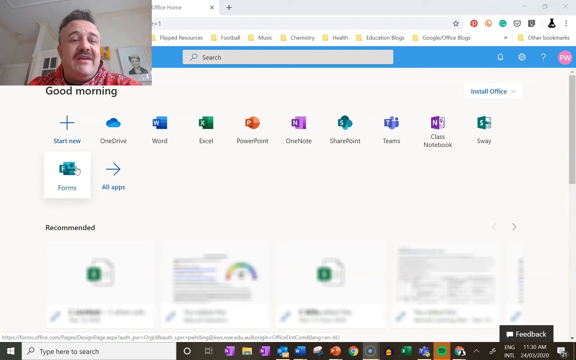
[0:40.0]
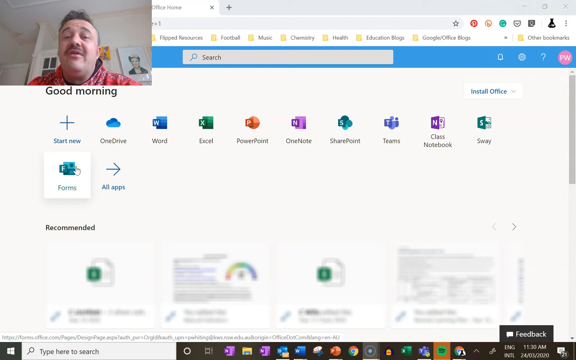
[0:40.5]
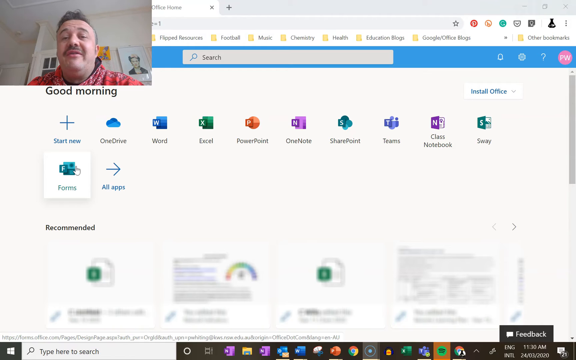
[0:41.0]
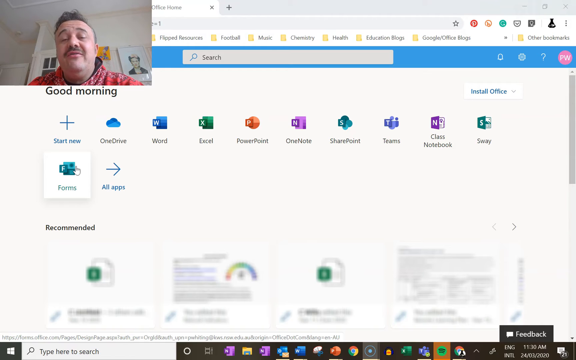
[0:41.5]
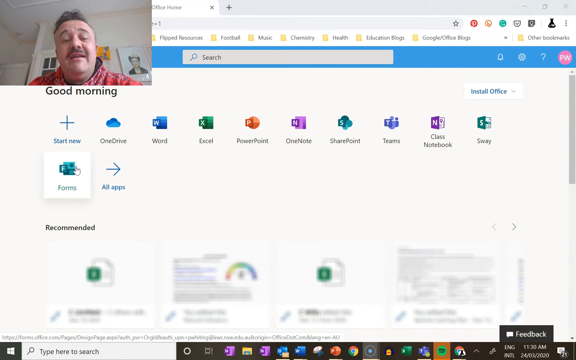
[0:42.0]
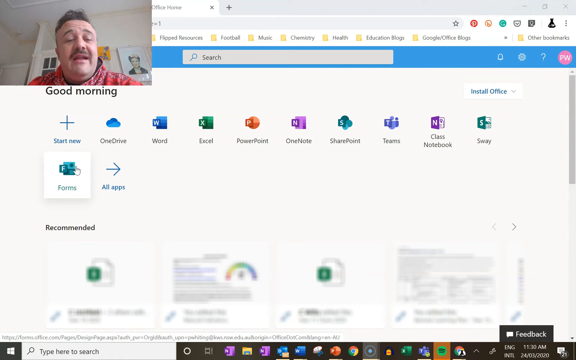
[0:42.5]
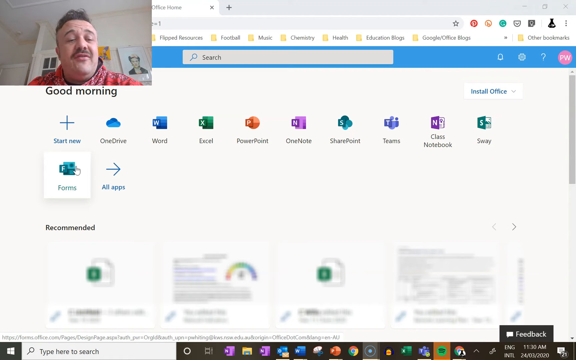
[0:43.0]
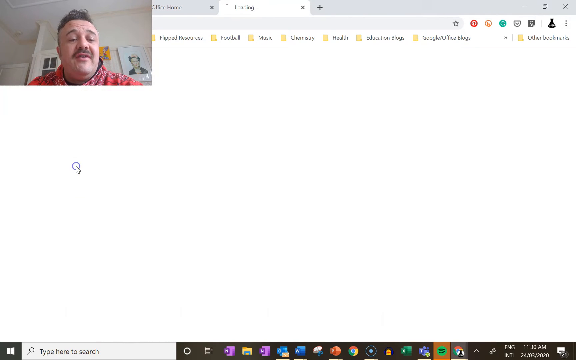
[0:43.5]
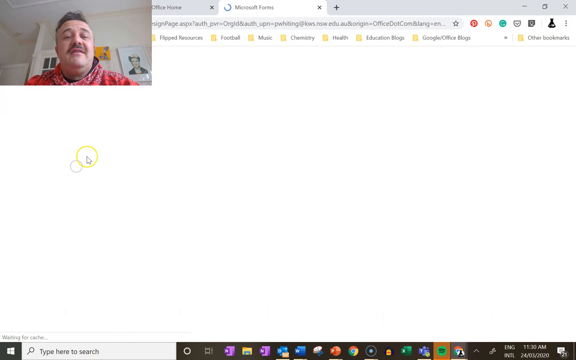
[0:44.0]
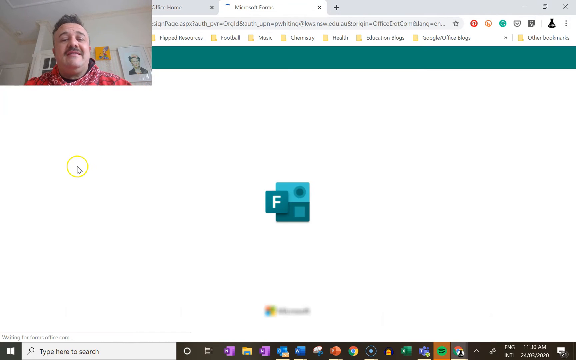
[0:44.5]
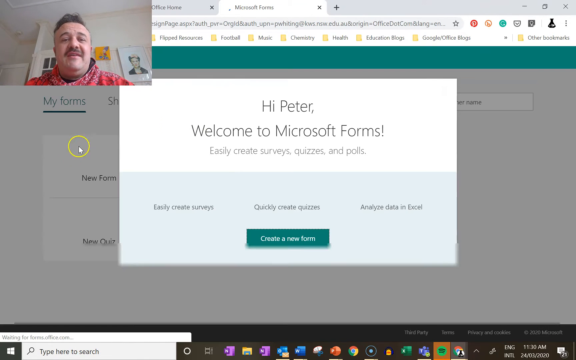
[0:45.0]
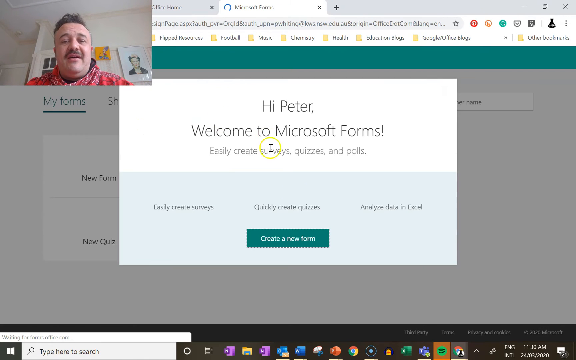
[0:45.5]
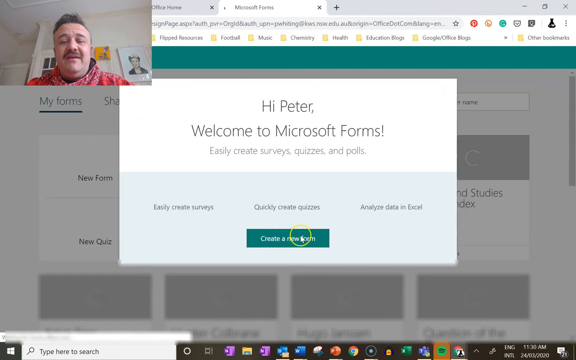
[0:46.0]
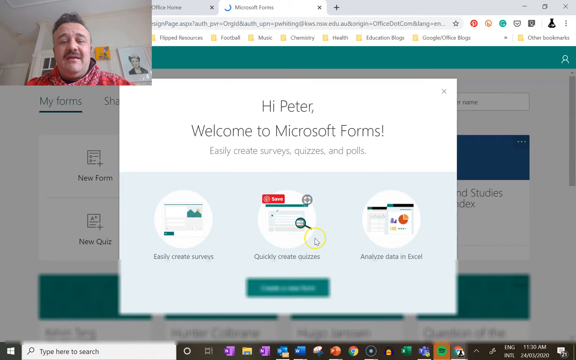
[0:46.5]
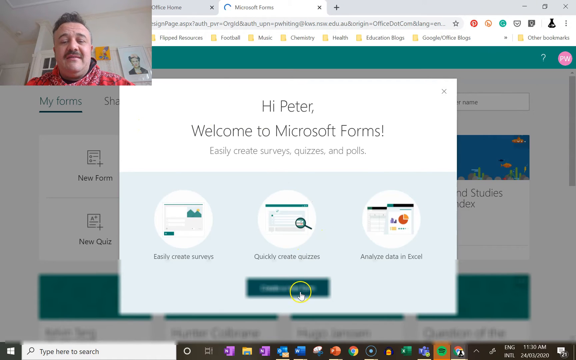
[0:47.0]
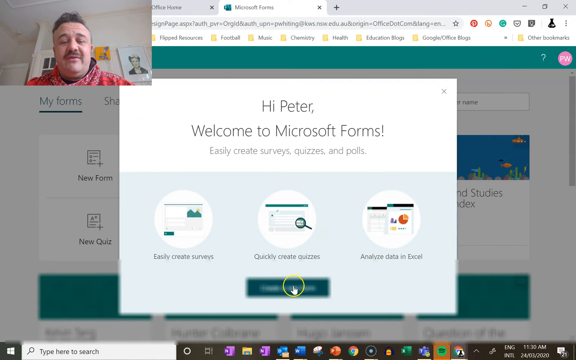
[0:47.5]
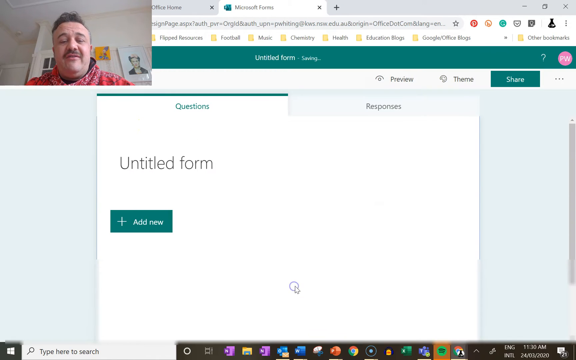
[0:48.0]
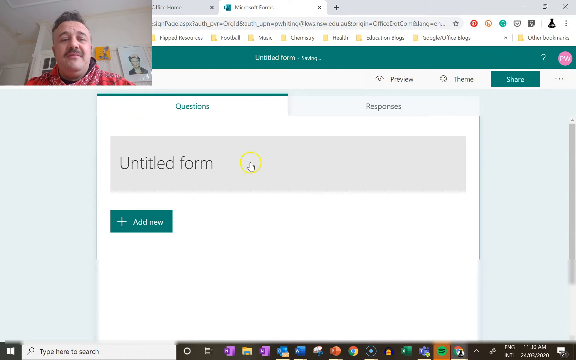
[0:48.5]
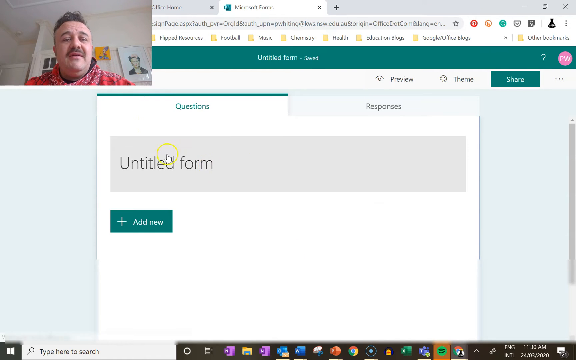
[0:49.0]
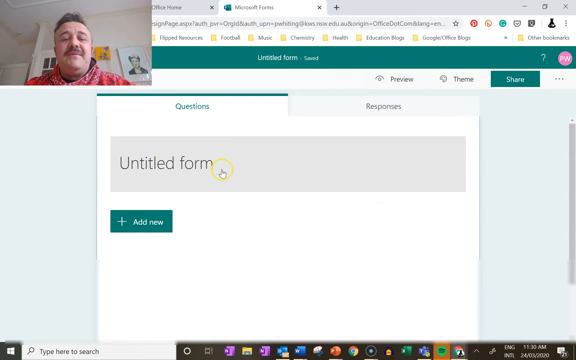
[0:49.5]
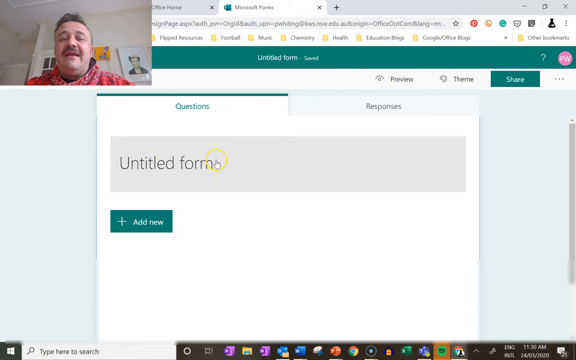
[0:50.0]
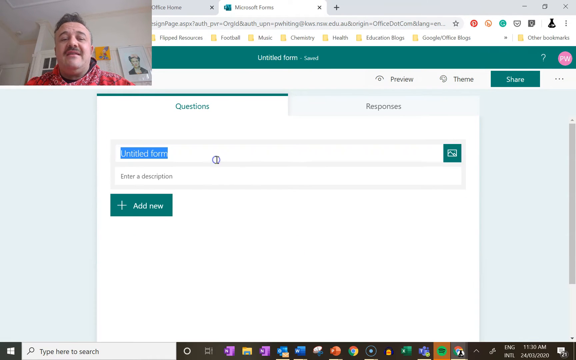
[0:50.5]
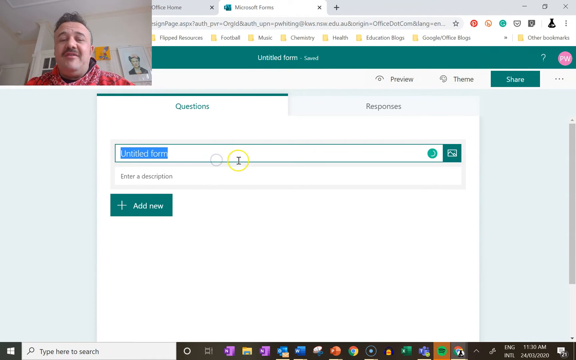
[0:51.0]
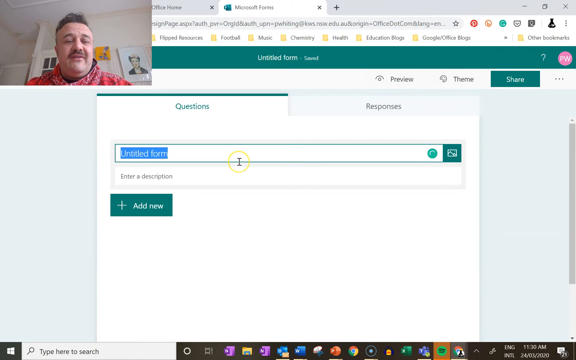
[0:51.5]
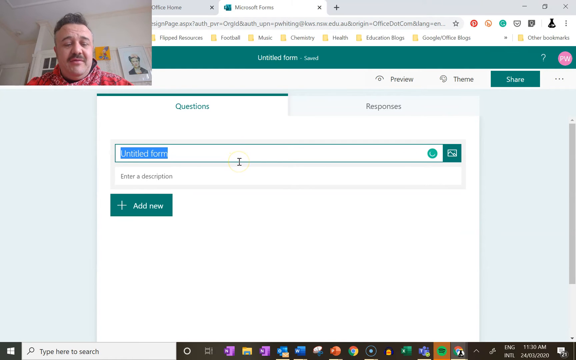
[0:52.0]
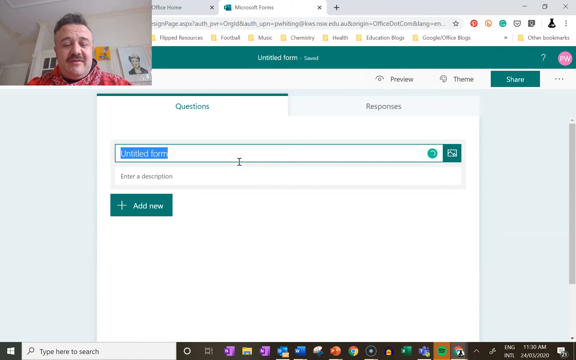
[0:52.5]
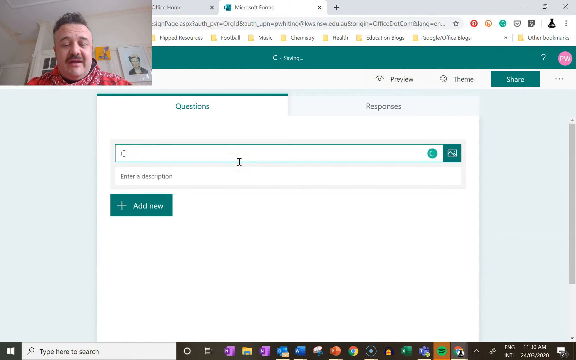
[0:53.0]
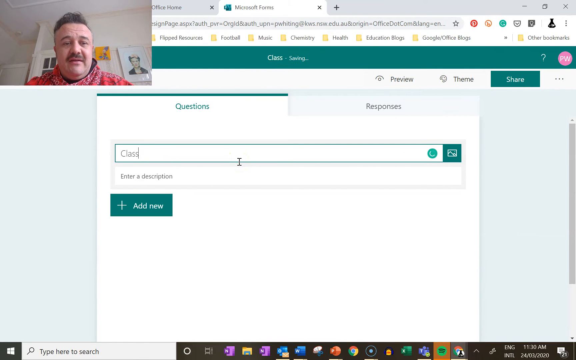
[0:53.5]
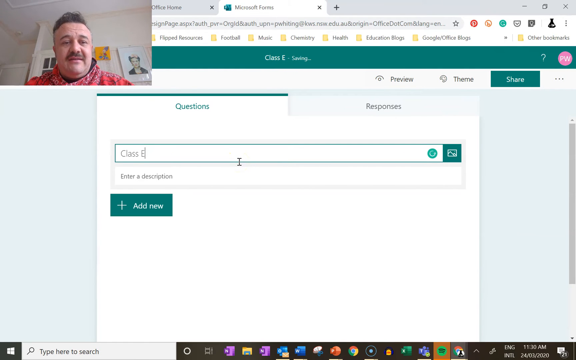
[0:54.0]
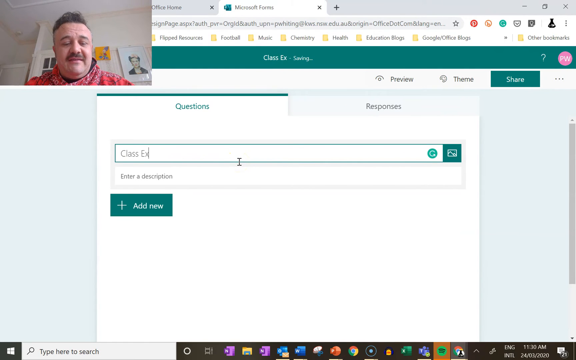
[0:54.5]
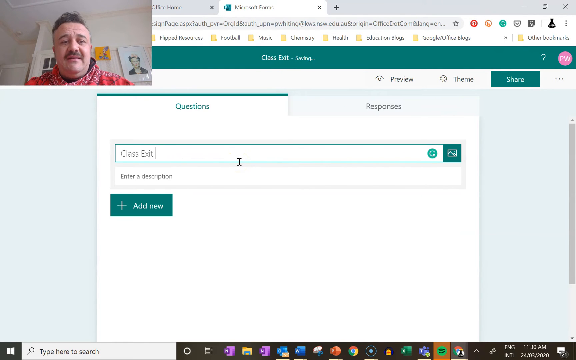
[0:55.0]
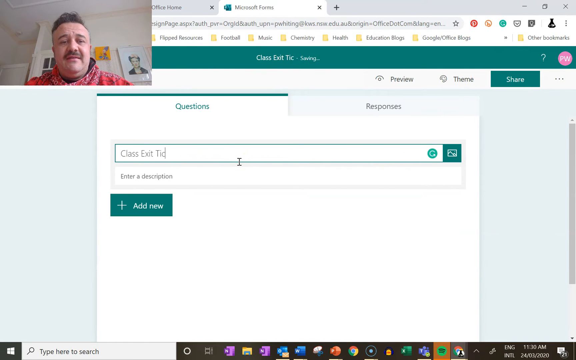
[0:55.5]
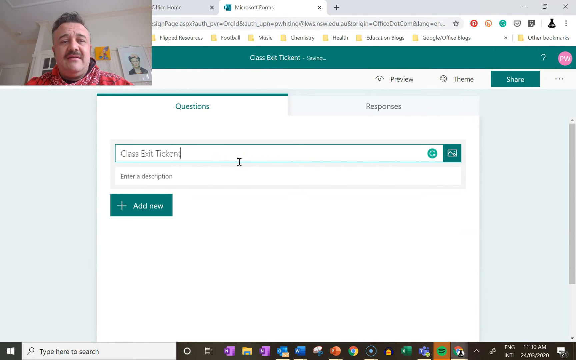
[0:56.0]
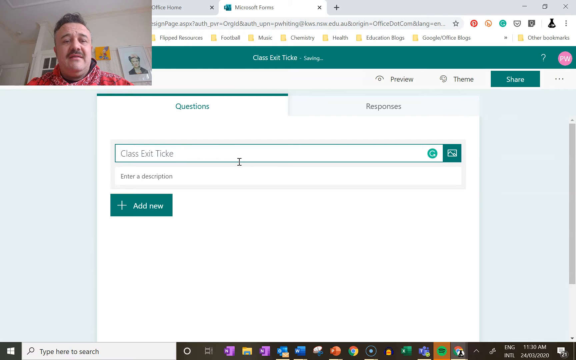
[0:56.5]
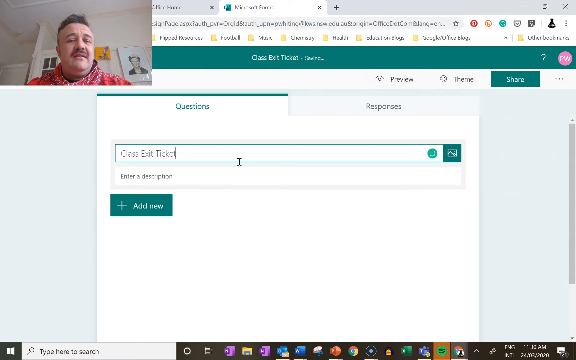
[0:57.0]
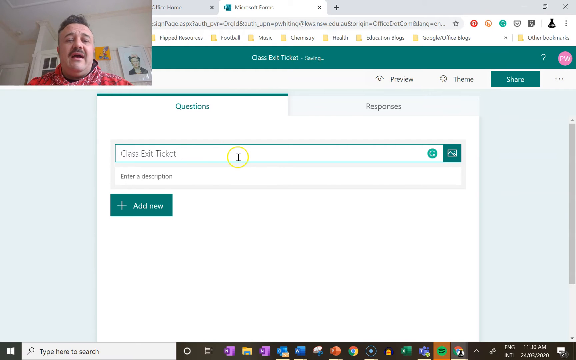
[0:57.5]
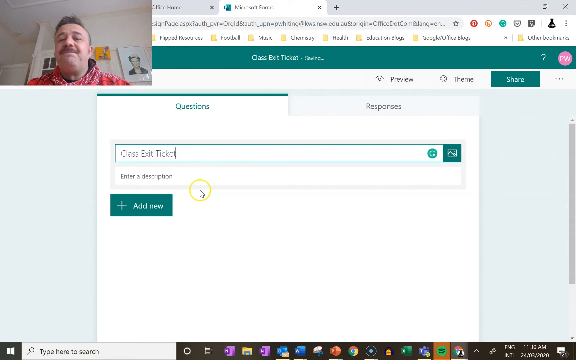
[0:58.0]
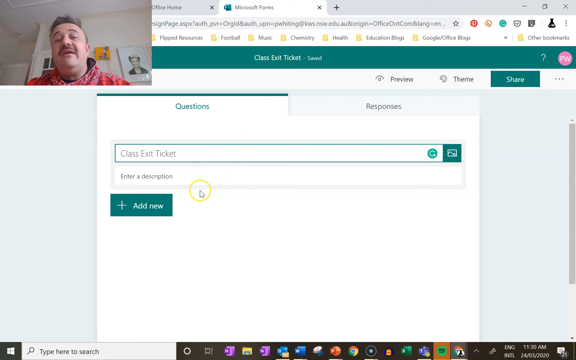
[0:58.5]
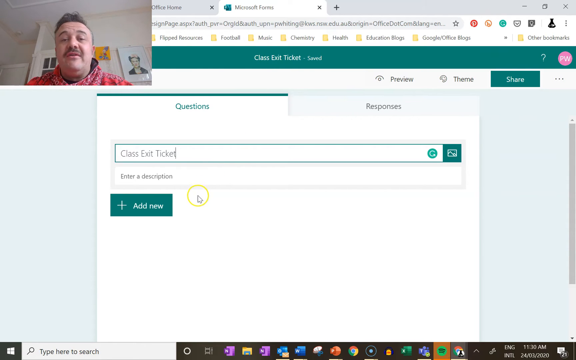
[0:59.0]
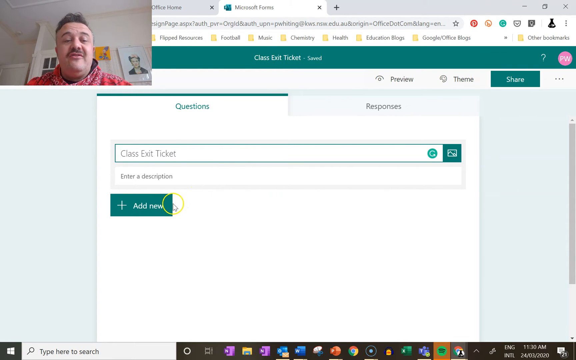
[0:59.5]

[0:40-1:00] A man vlogs from the upper left corner of the screen, with "good morning" underneath his picture. He uses a white circle with a yellow line around it to highlight and click on different areas. First he clicks a section at the top, which brings up a page that says "hi Peter welcome to Microsoft forms easily create surveys quizzes and polls". The cursor moves down to a green button at the bottom that says "create a new form", and he clicks it. The page then shows "untitled form" and "add more". He clicks on "untitled form", highlights that area and types "class exit ticket". He then moves down to the add new button and clicks it as well.